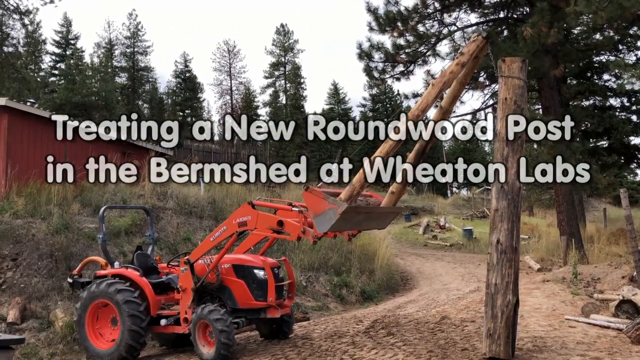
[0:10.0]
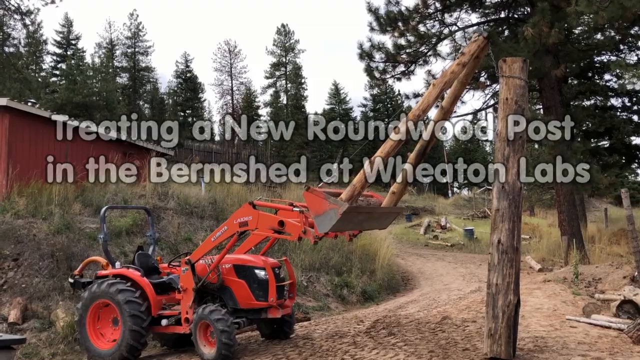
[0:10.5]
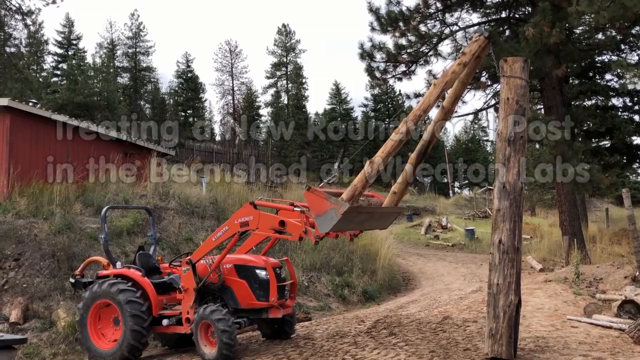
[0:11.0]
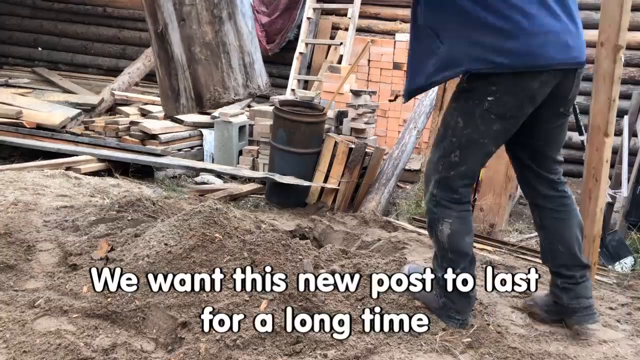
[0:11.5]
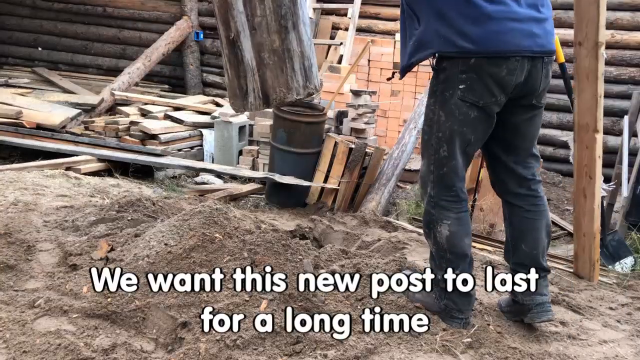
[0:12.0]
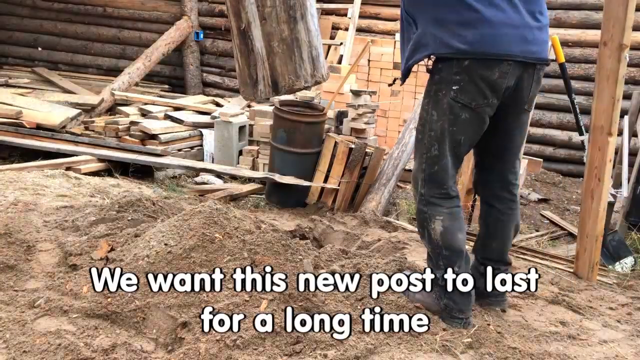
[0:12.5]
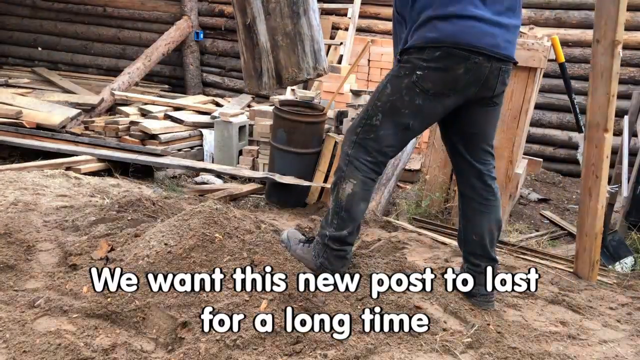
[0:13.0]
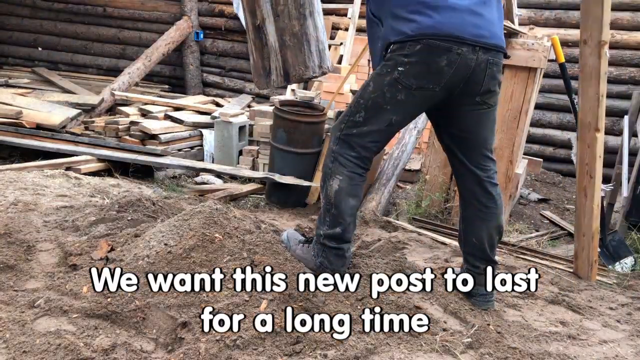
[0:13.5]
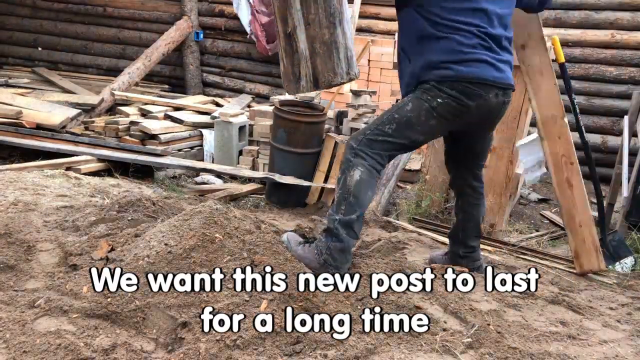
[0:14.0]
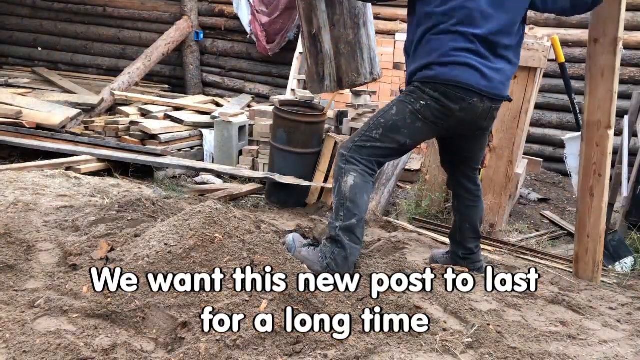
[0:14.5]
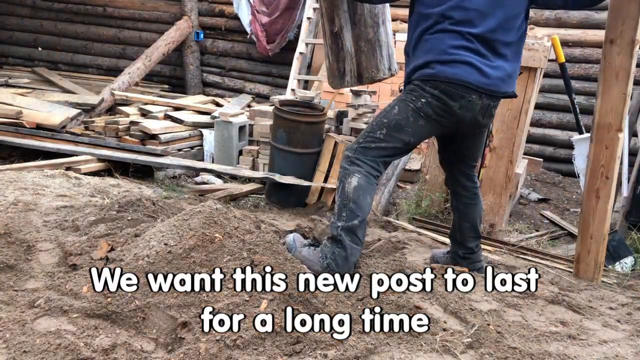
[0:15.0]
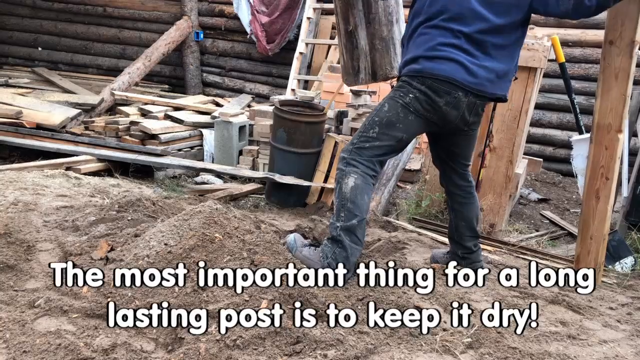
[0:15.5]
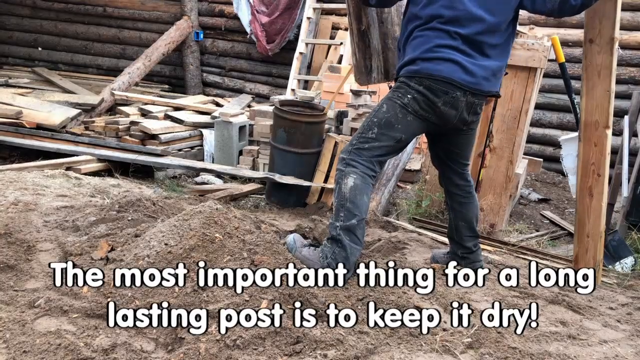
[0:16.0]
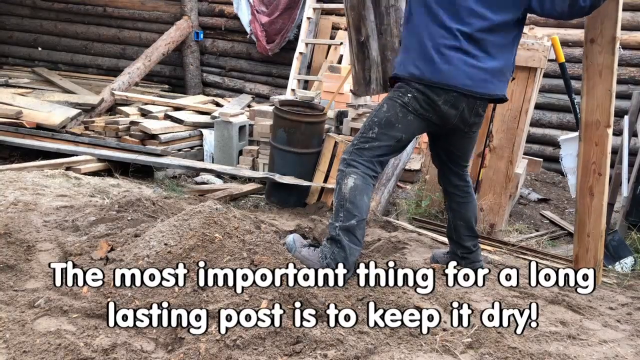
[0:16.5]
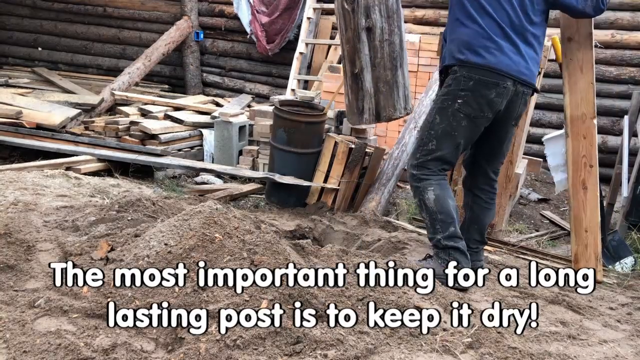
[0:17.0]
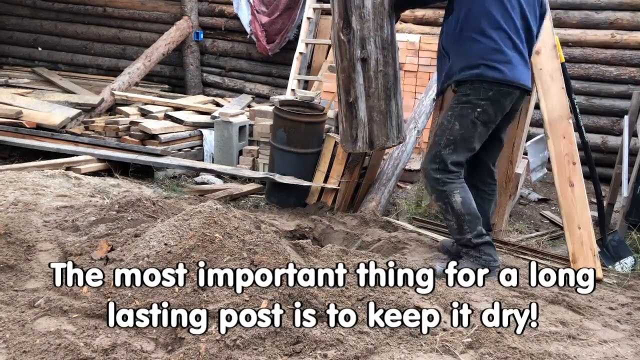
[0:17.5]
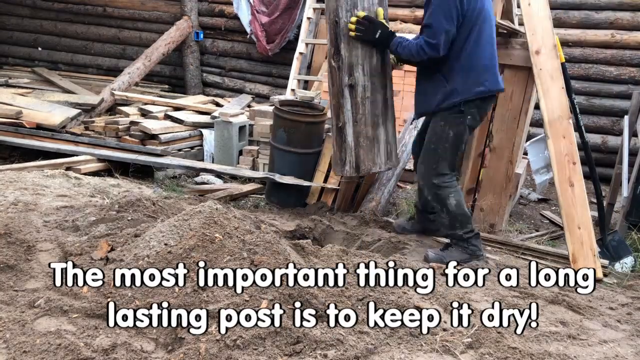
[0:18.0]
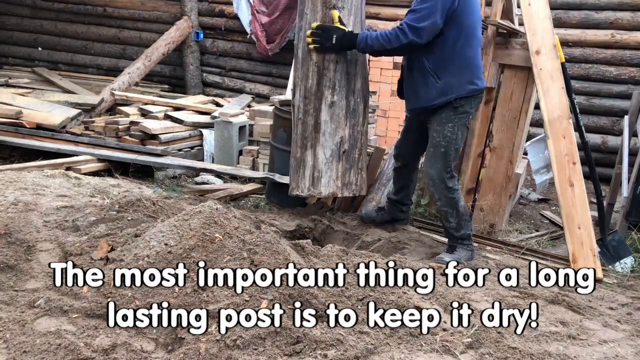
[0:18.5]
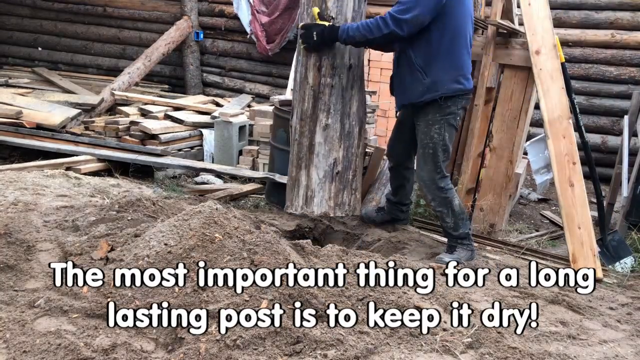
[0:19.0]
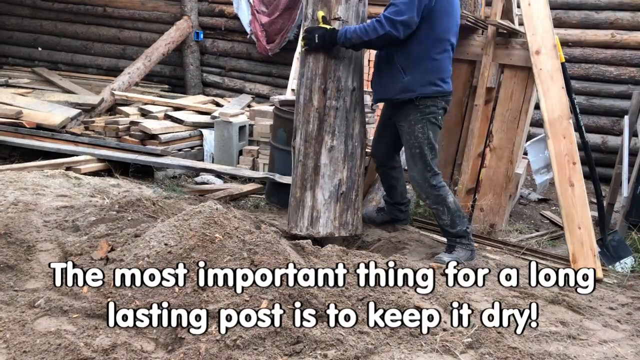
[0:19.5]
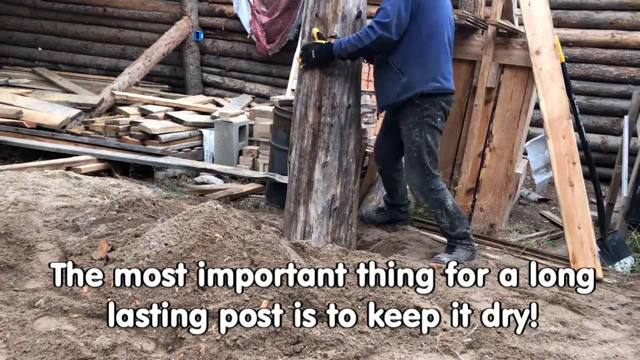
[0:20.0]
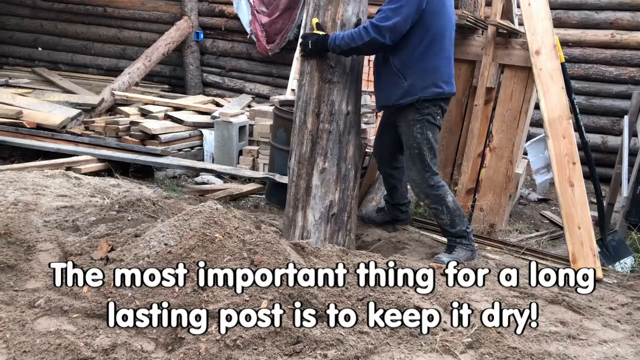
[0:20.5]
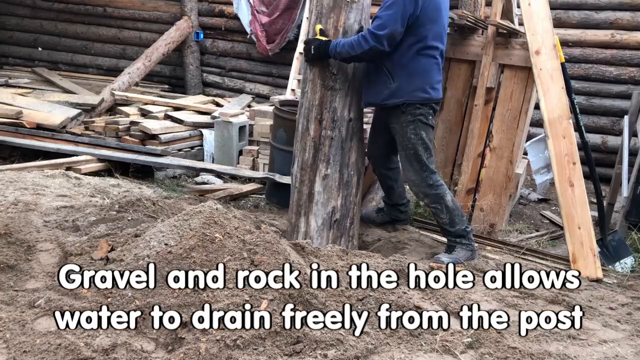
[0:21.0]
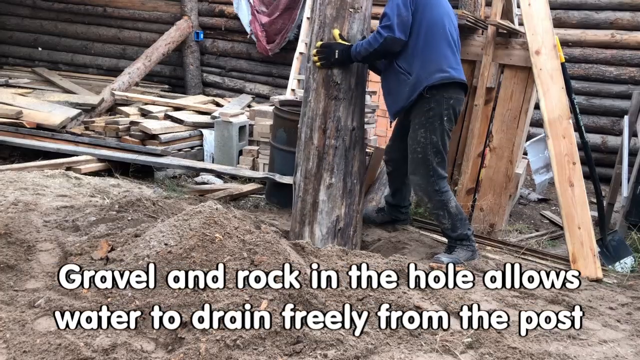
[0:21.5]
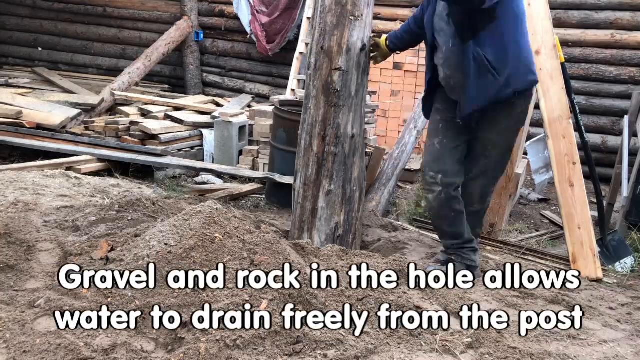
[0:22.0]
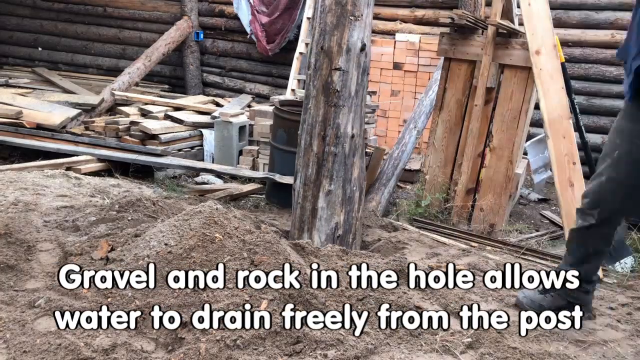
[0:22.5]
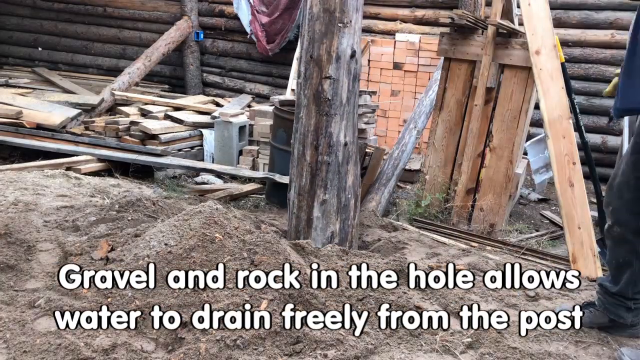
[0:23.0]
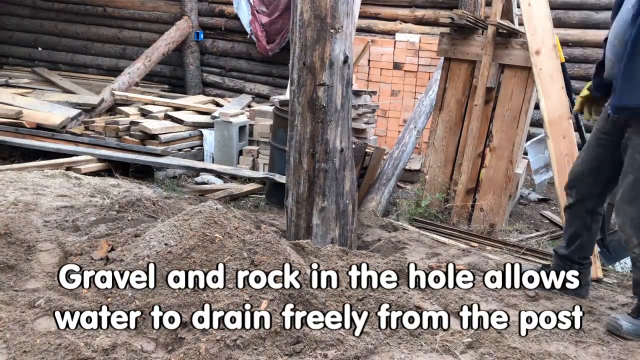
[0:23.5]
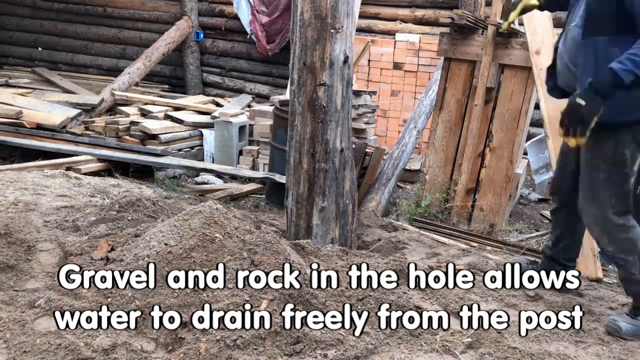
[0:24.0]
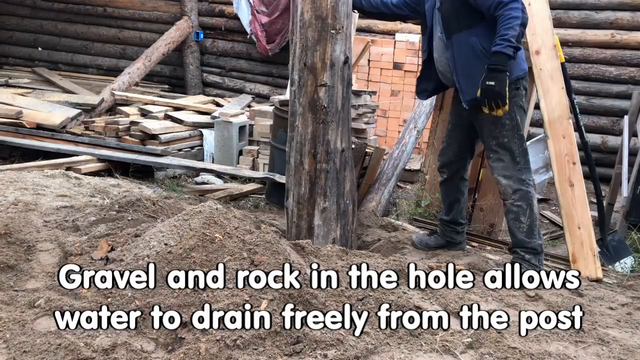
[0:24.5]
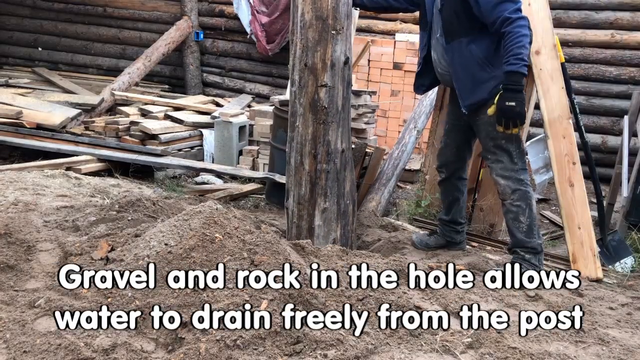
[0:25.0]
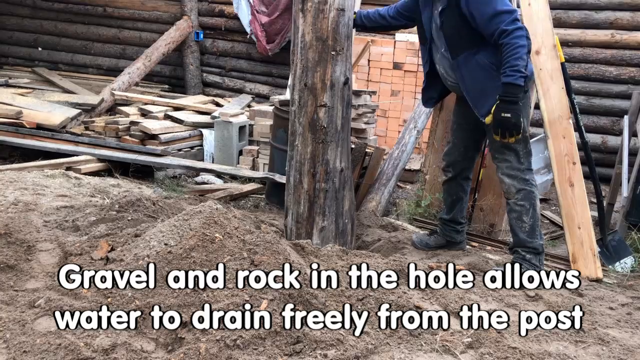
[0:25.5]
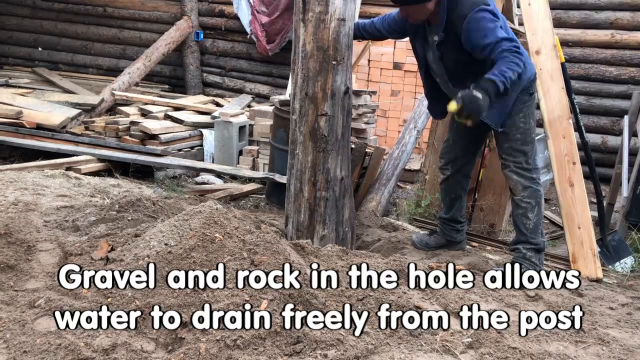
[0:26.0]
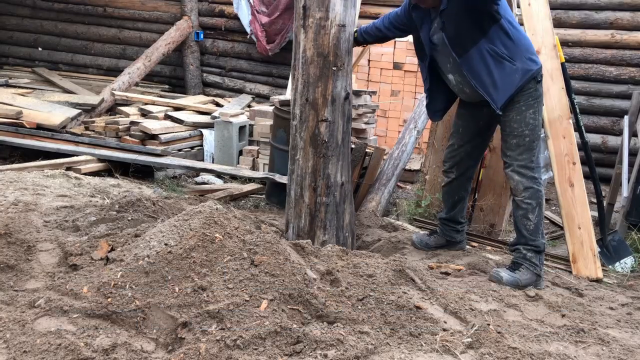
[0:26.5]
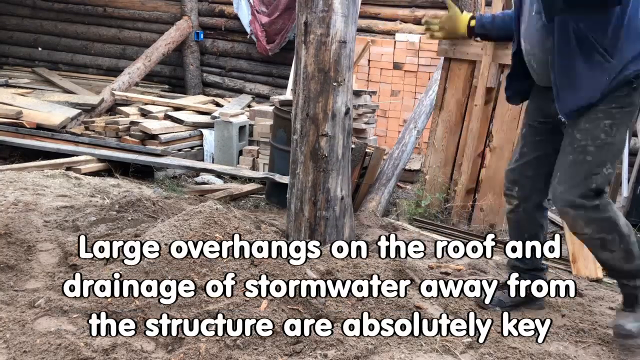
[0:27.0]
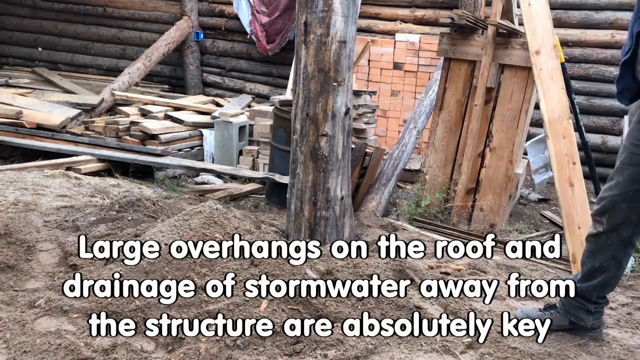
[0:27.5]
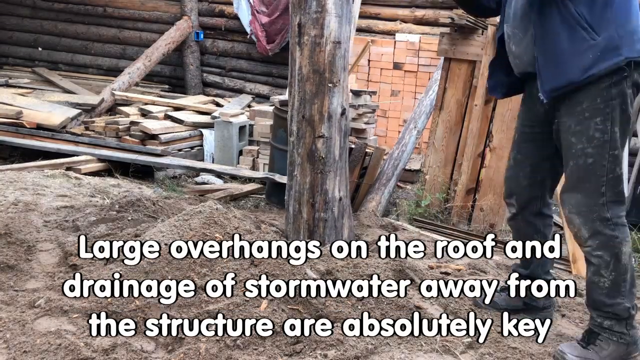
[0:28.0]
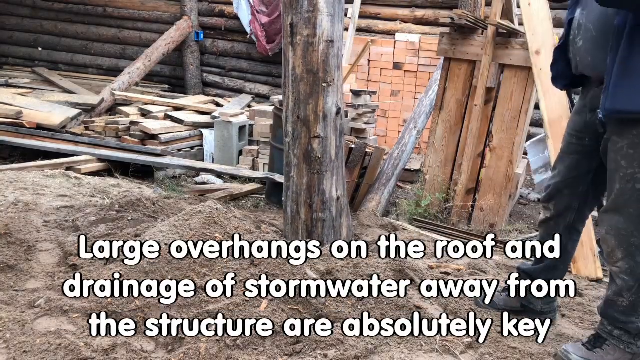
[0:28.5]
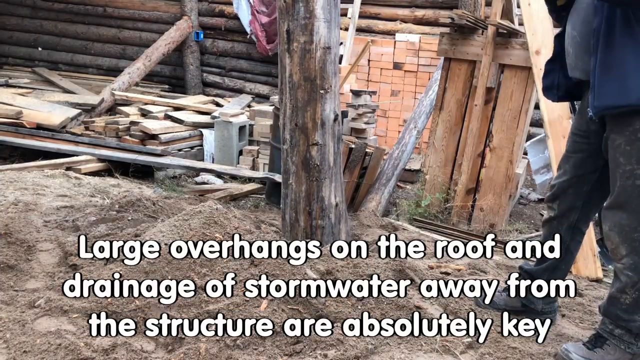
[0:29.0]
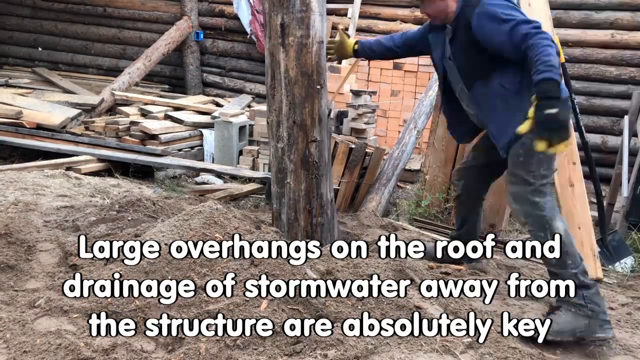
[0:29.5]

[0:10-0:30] A title screen reads "Treating a New Roundwood Post in the Bermshed at Wheaton Labs." In the opening scene, a front loader holds up posts, with trees and a dirt road behind it. The scene then switches to a large wooden post being inserted into a hole in the ground. Behind it is a structure made of wooden logs, and next to it are the legs of a person helping to guide the post into the hole. Captions across the bottom of the screen describe what is happening, appearing one sentence at a time; in their entirety they read, "We want this new post to last for a long time. The most important thing for a long-lasting post is to keep it dry. Gravel and rock in the hole allows water to drain freely from the post. Large overhangs on the roof and drainage of storm water away from the structure are absolutely key."